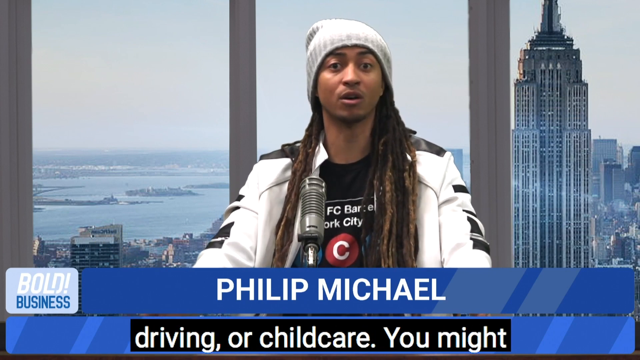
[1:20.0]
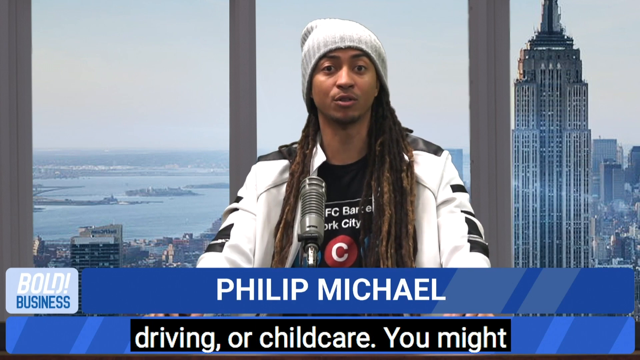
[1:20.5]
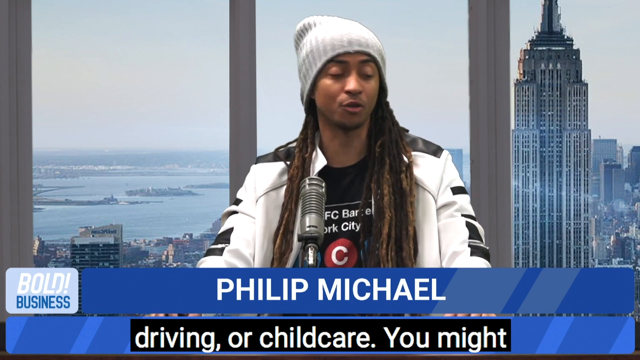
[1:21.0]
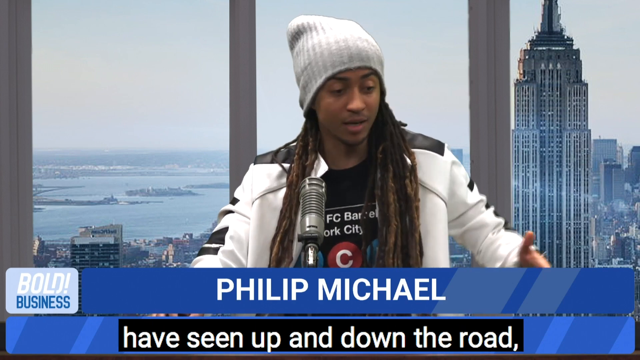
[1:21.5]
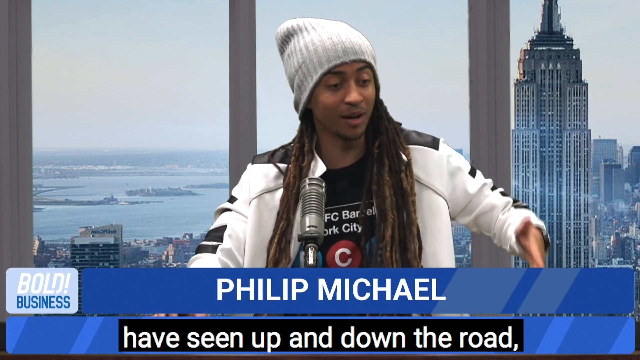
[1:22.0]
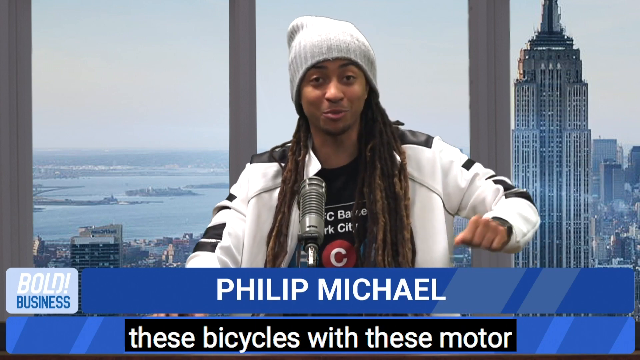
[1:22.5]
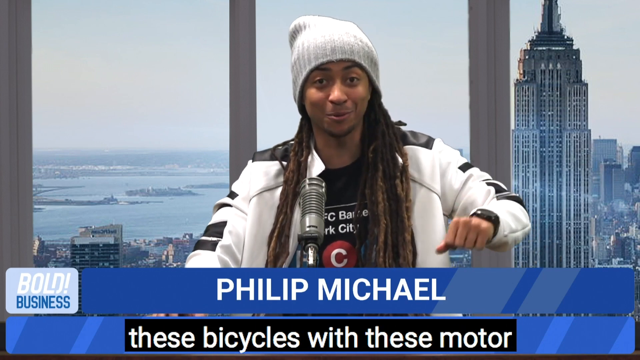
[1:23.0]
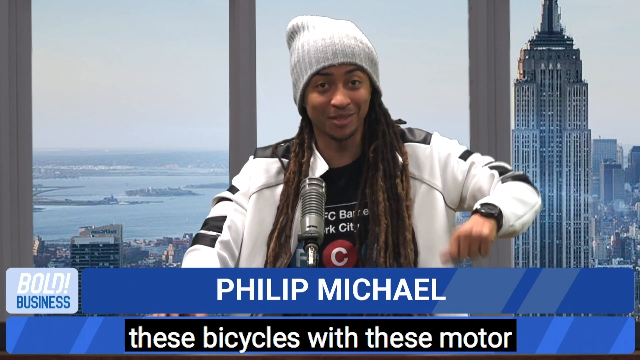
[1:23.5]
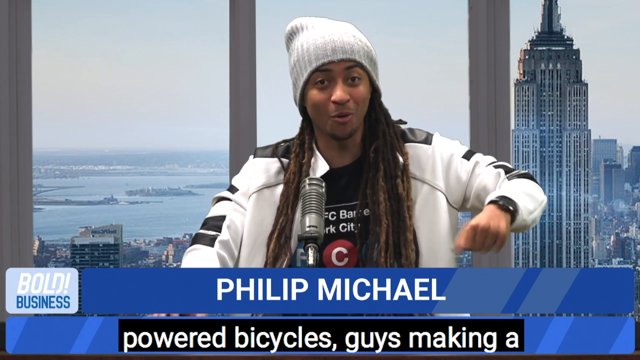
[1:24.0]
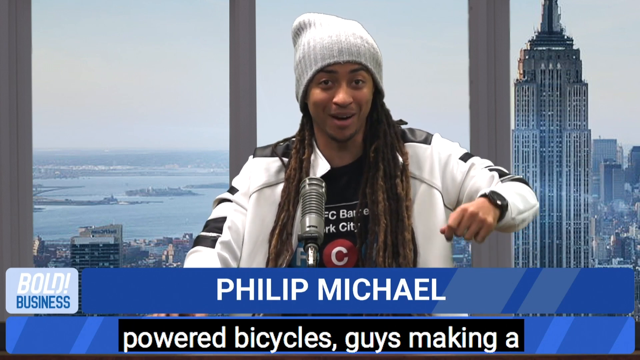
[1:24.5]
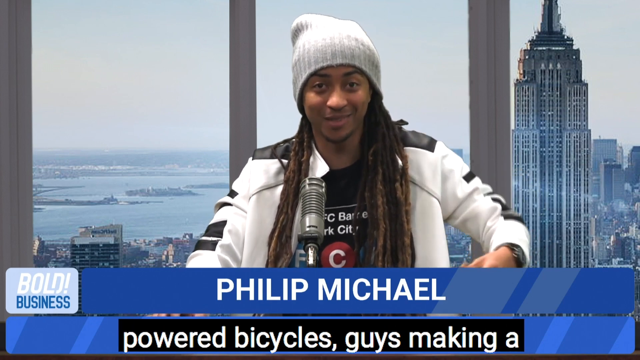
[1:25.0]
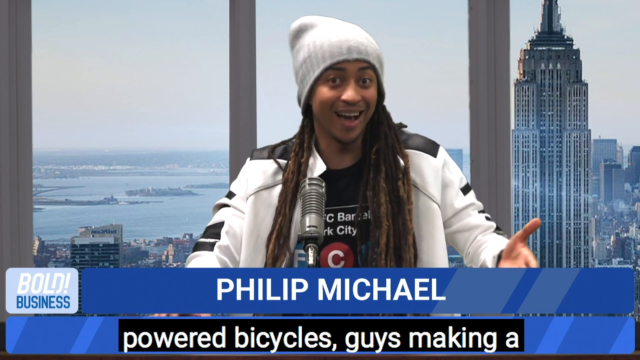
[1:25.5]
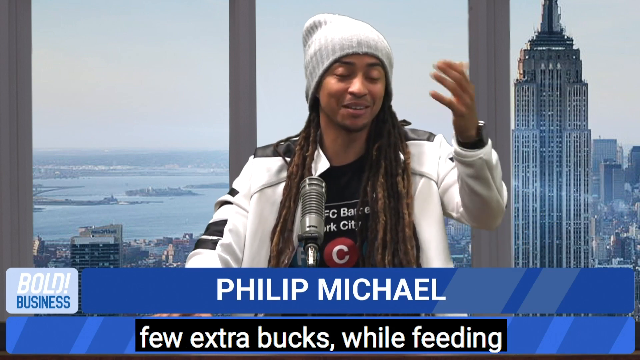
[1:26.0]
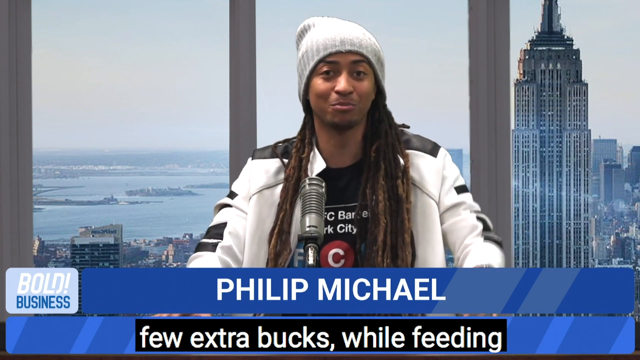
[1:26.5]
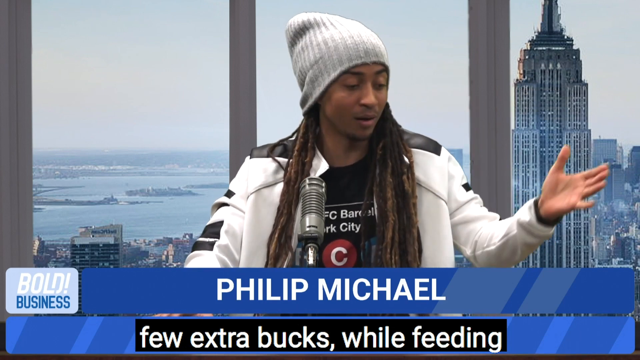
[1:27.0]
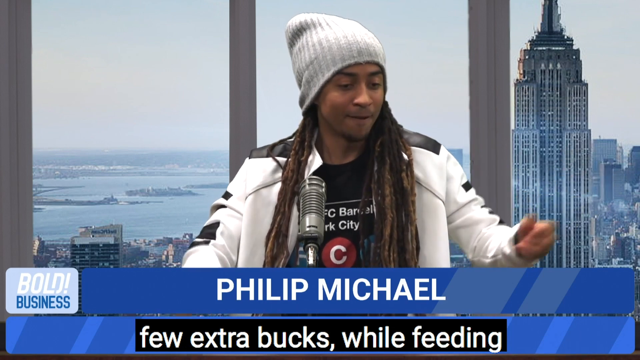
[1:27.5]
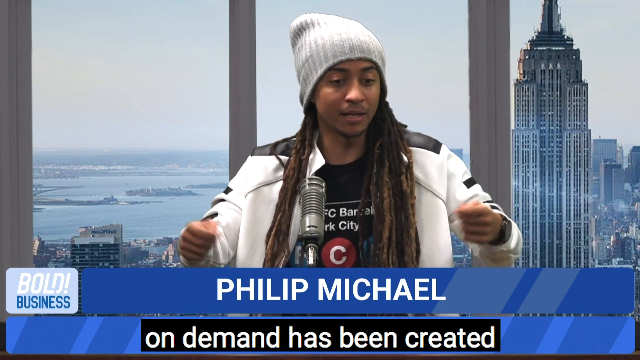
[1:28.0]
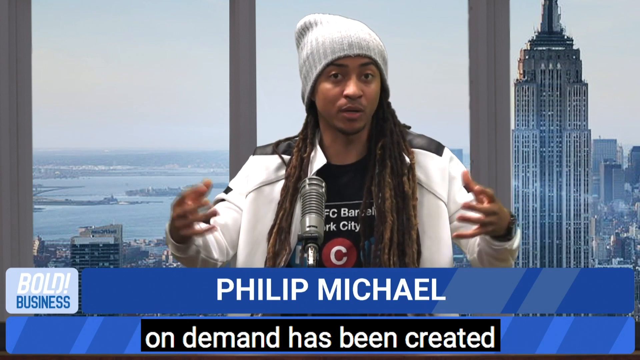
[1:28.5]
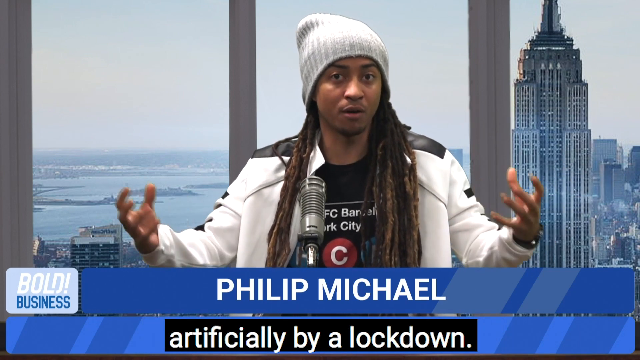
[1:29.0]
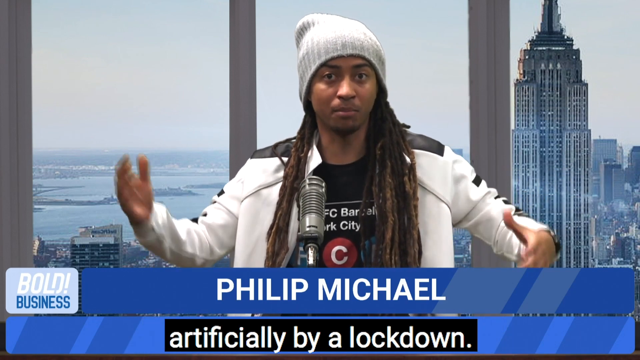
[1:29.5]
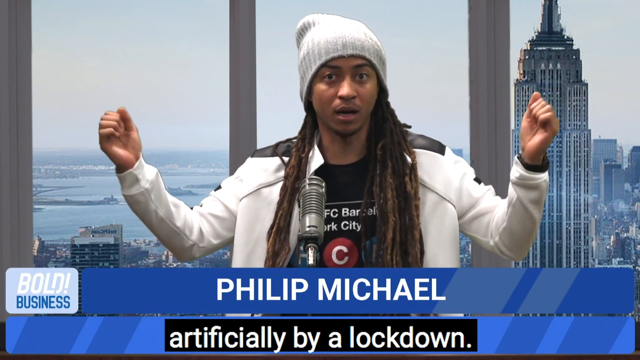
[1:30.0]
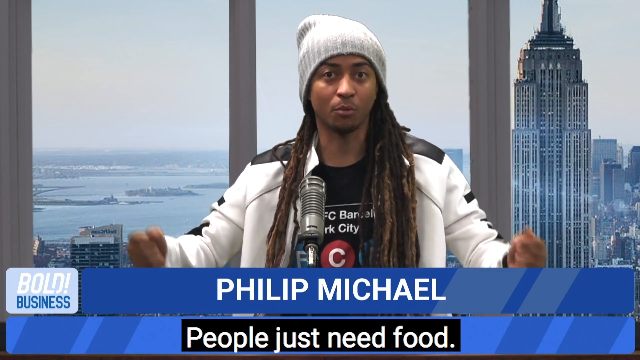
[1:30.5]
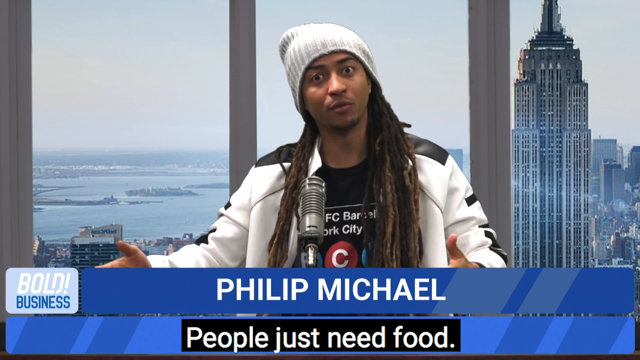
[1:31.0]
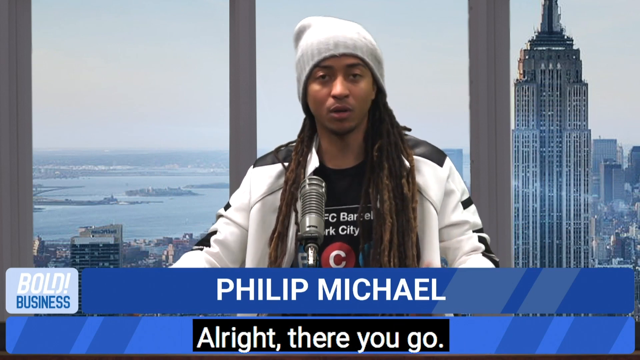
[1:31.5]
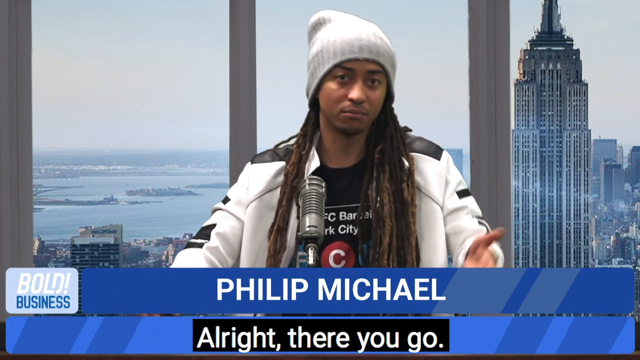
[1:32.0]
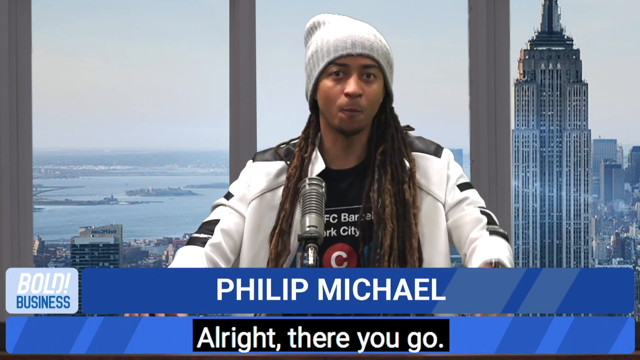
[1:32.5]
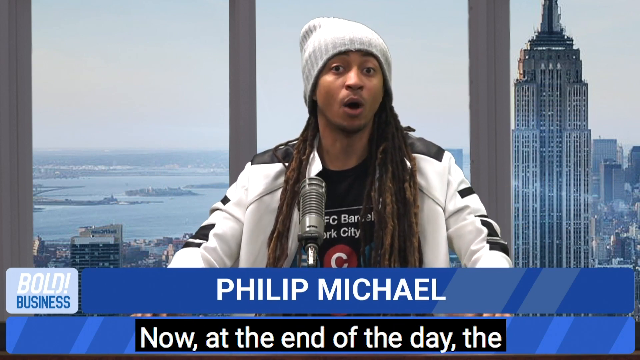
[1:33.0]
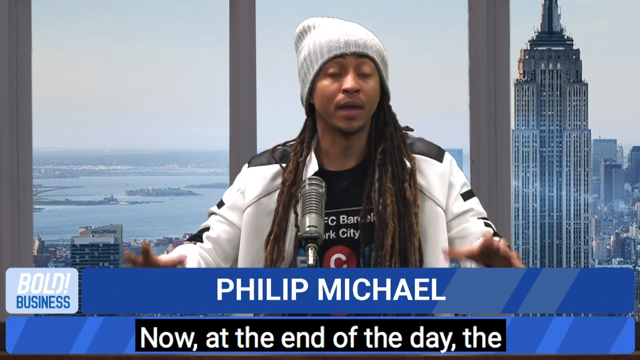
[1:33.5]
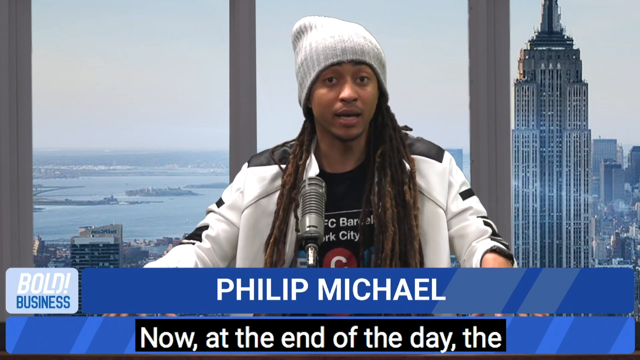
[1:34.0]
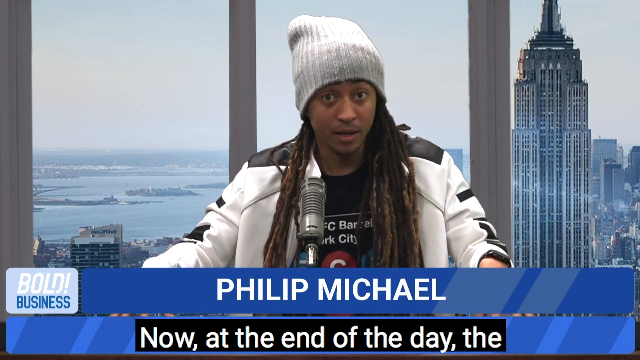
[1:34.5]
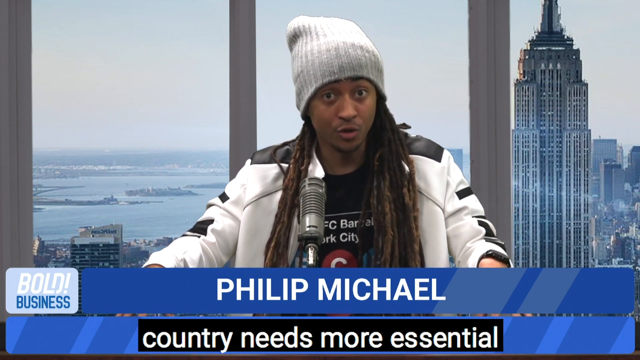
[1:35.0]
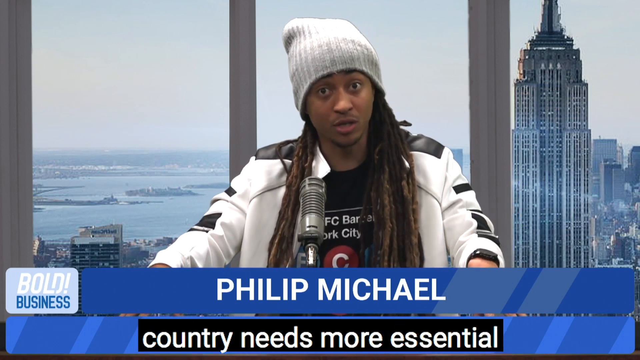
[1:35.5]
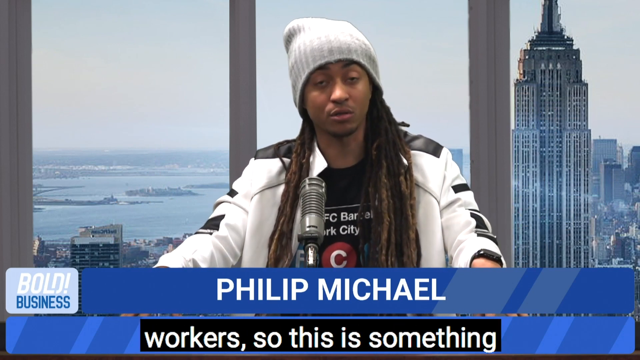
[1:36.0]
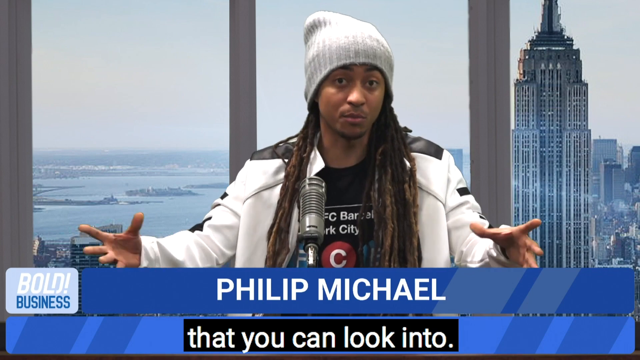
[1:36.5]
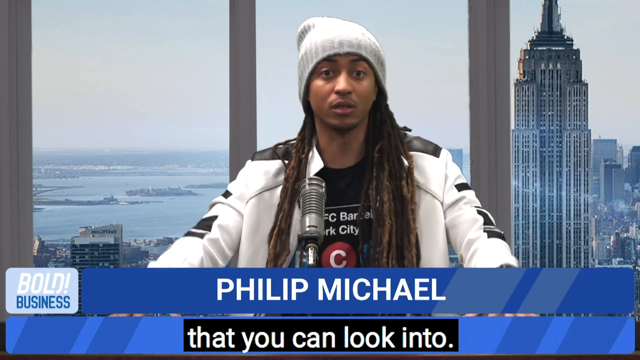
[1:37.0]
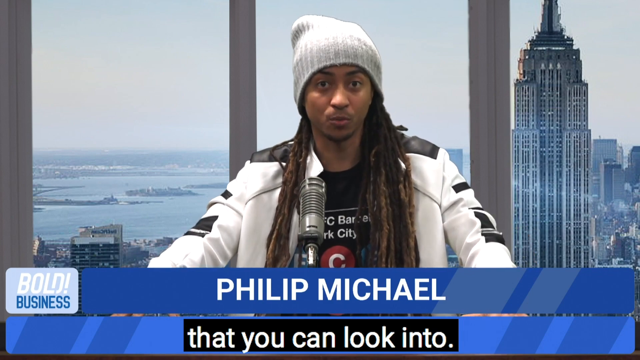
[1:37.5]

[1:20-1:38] The same broadcast continues. The broadcaster appears to be sitting in his home in front of a green screen, speaking to his viewers. He has very expressive eyes, a baby face and radiant skin, and he is dressed very fashionably. He has a guest on the show: the screen pops over to the guest very quickly and then pops right back to Philip Michael. The guest looks like he is broadcasting from his home as well; he has dark hair and tan skin and appears engaging.